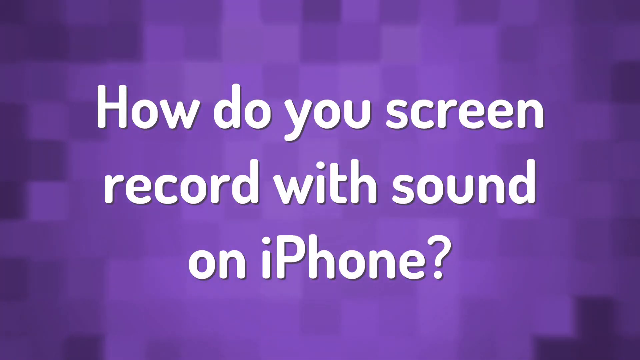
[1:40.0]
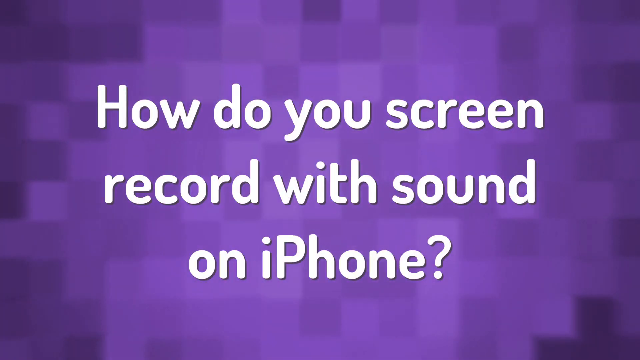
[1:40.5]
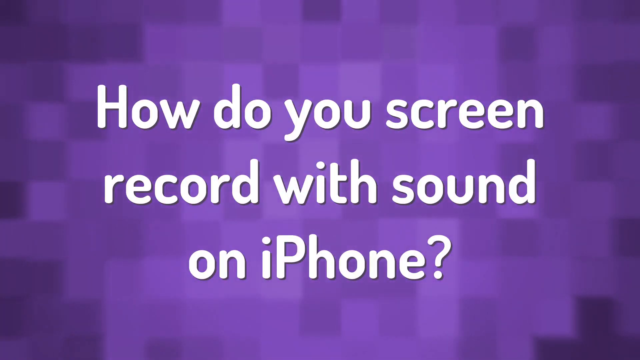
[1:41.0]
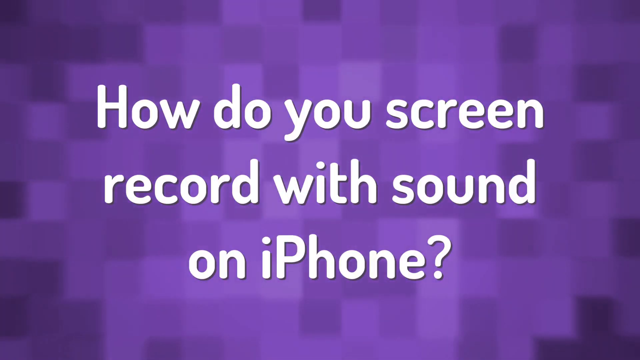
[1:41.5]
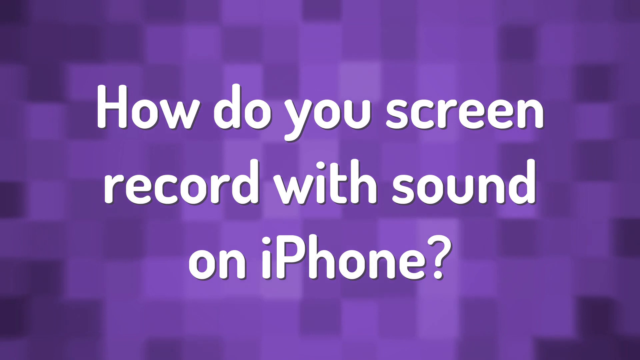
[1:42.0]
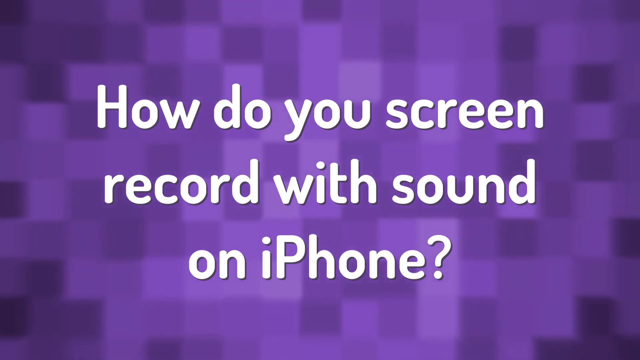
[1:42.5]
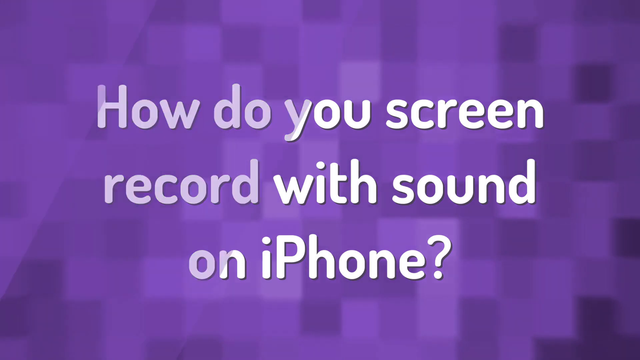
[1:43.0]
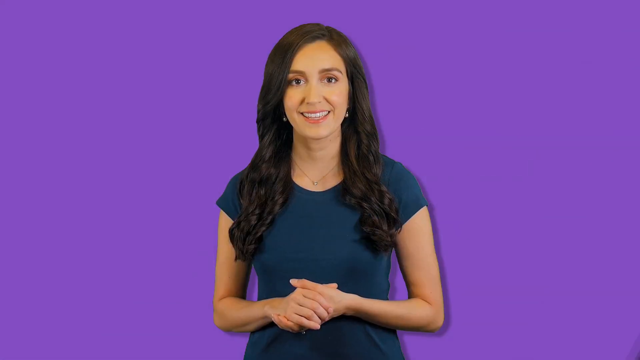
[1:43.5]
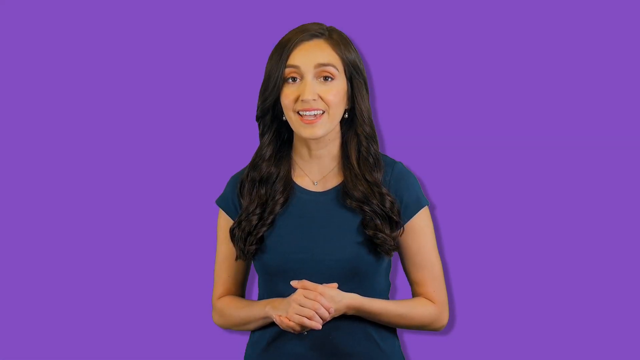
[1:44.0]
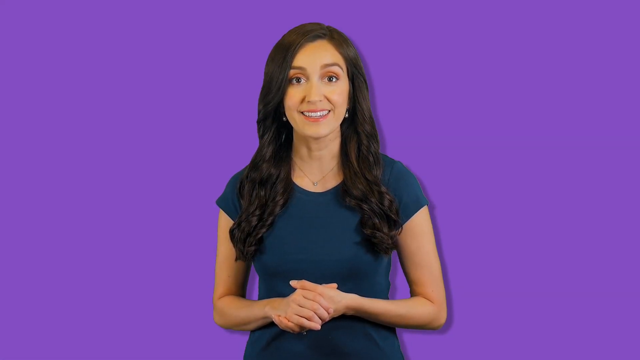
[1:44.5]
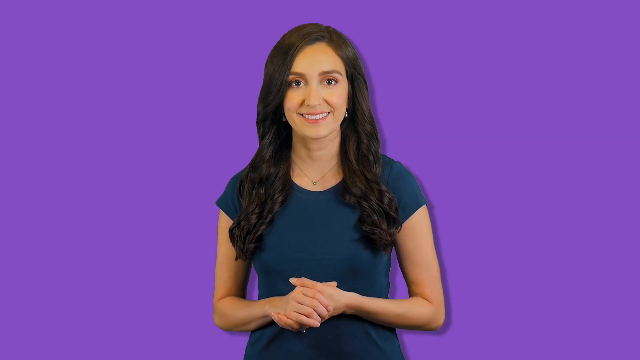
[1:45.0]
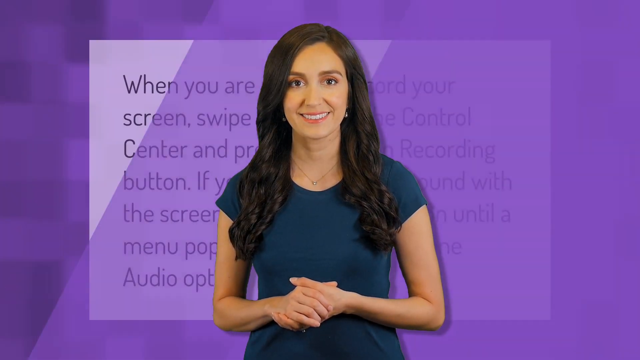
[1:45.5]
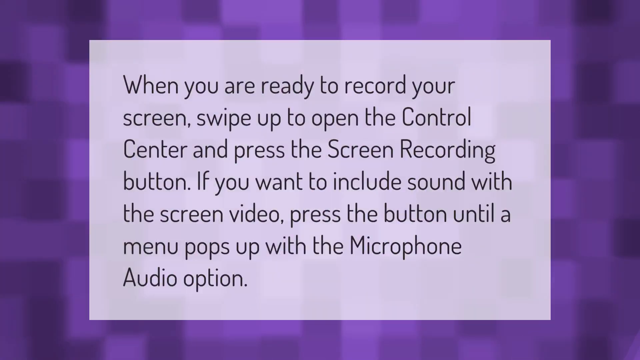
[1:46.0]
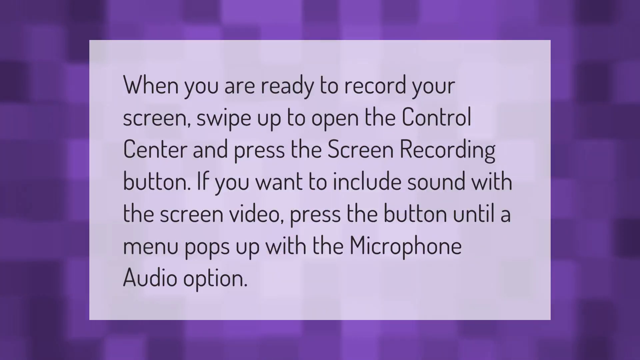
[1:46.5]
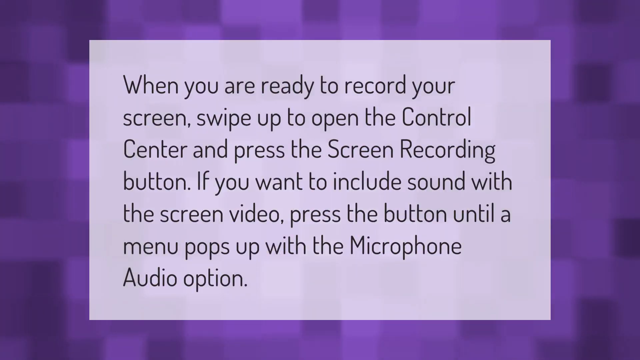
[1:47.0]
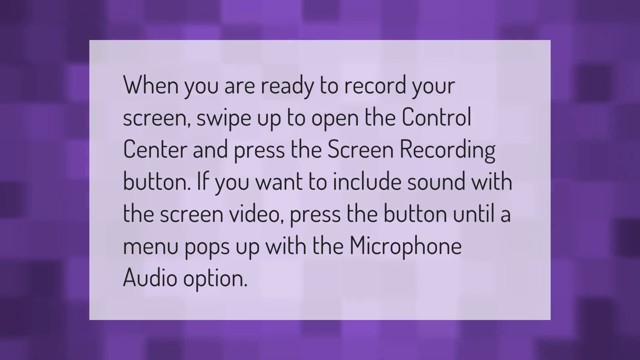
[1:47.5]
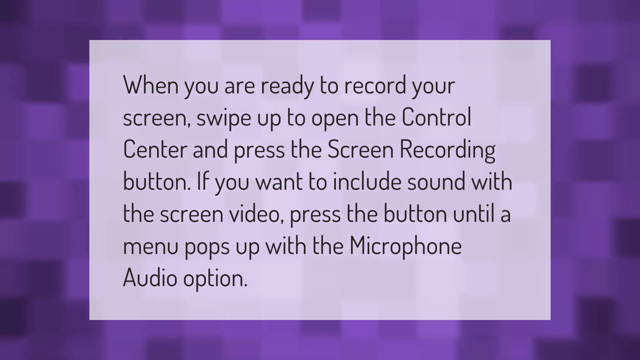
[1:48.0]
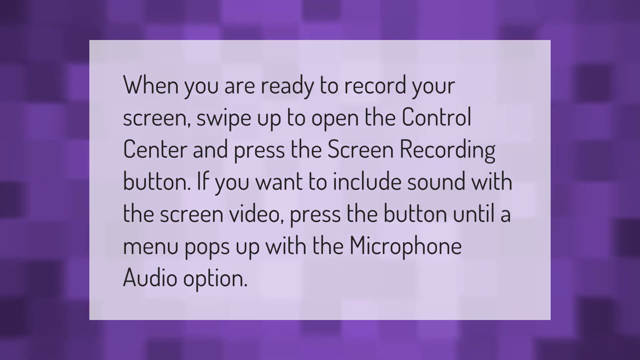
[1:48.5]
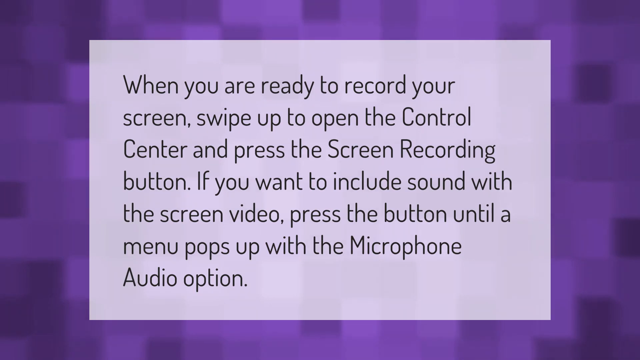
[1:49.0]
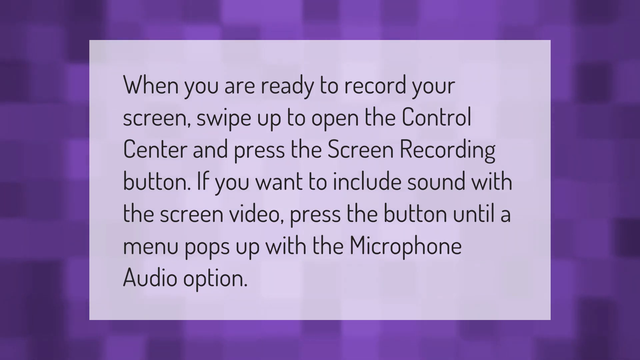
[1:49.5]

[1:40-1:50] A lavender background patterned with small squares ranges from lighter to darker lavender, with white text in the middle reading "how do you screen record with sound on iPhone?" The video transitions to a solid lavender background with a woman in front. She has brown hair to her chest and wears earrings that appear to be silver, light makeup, light lipstick, a gold necklace and a teal short-sleeved pullover shirt. She speaks, using hand gestures, eye movements and smiles.